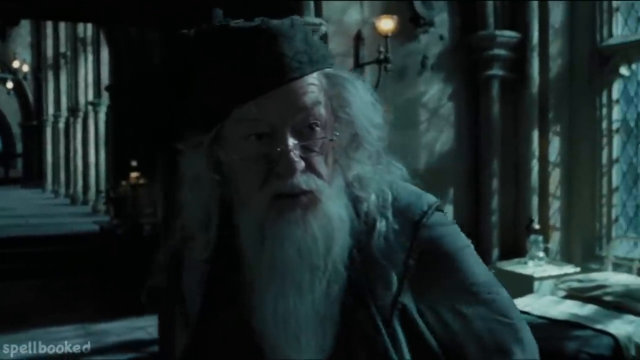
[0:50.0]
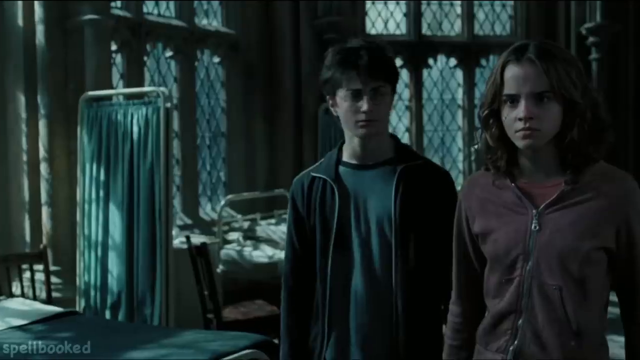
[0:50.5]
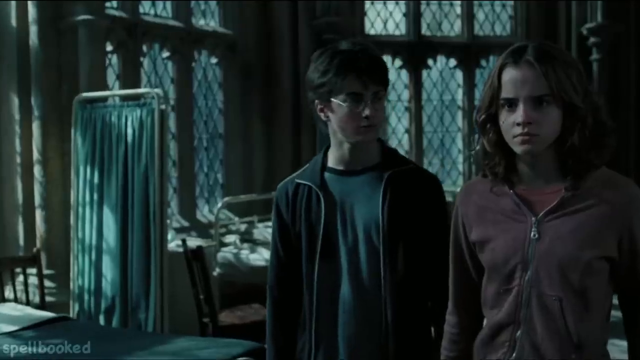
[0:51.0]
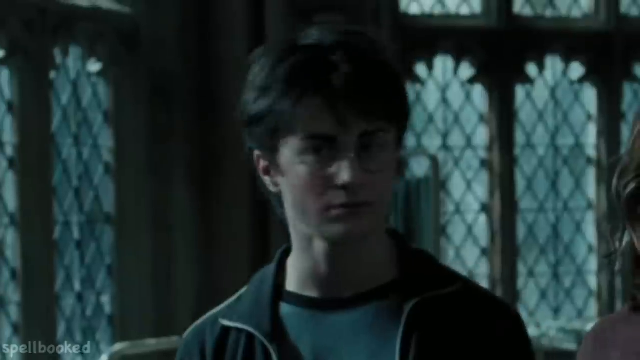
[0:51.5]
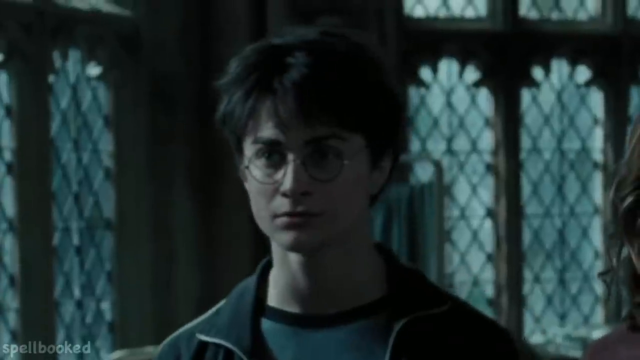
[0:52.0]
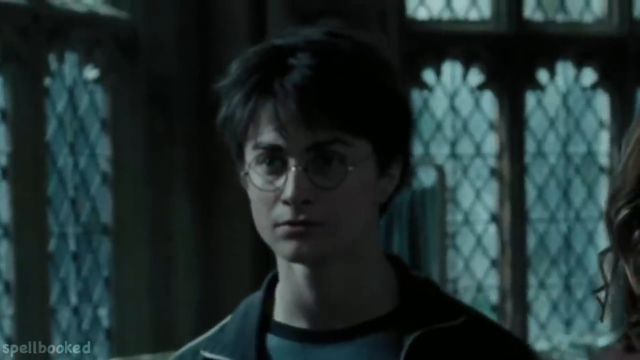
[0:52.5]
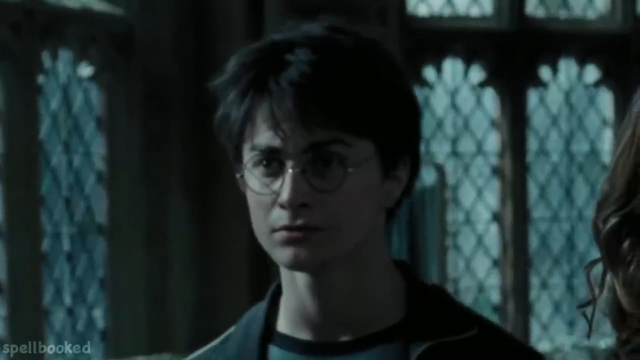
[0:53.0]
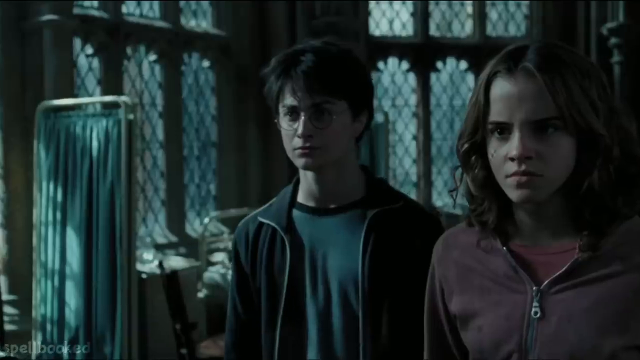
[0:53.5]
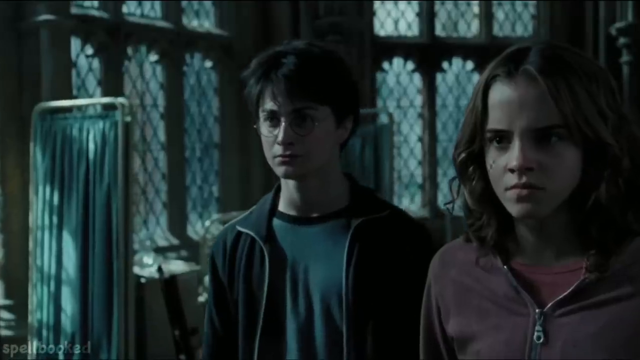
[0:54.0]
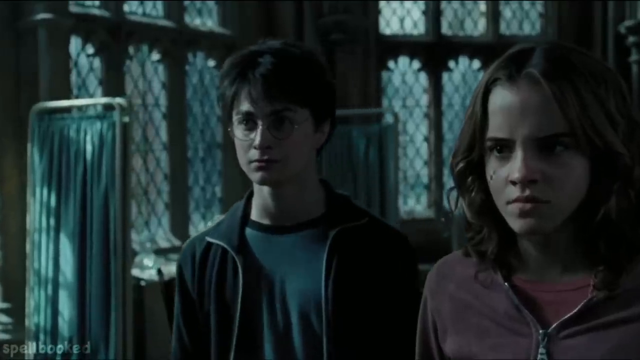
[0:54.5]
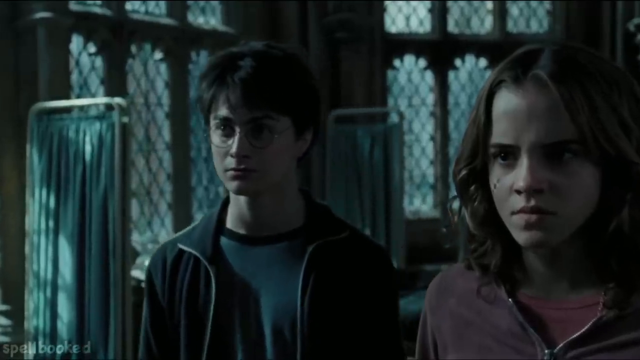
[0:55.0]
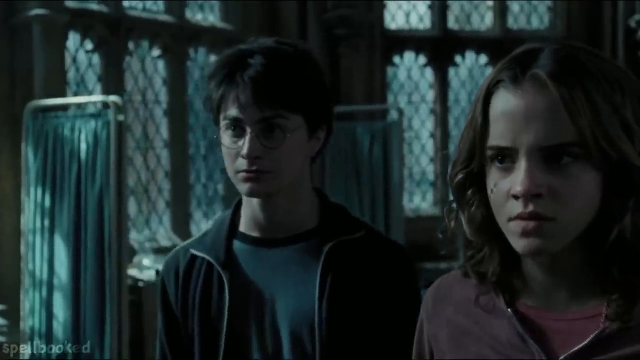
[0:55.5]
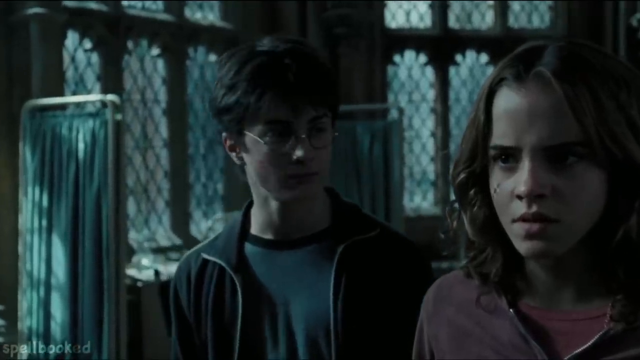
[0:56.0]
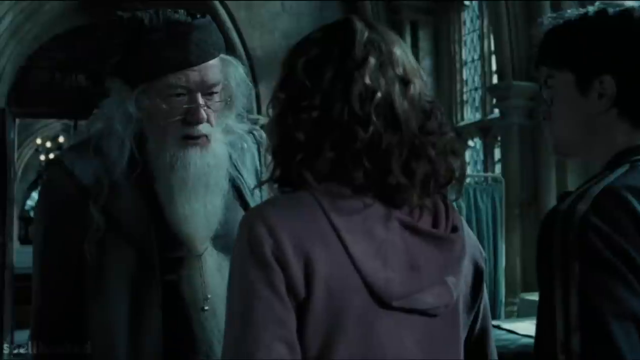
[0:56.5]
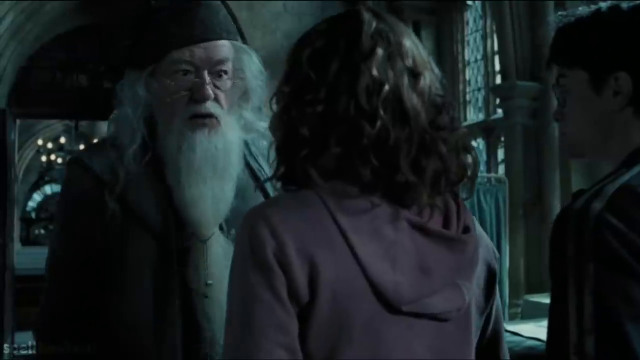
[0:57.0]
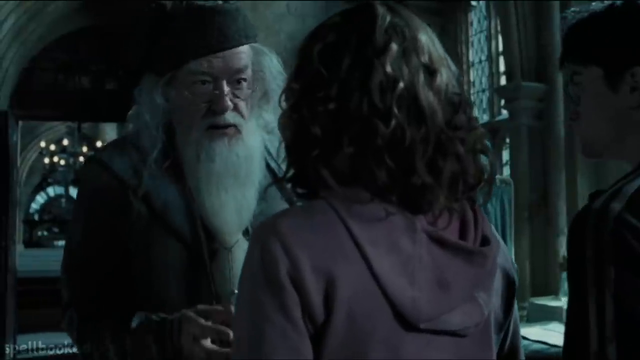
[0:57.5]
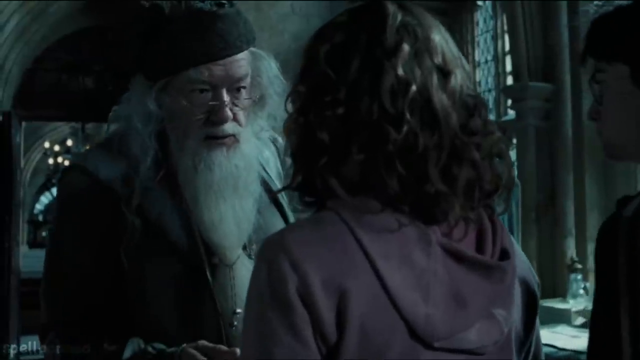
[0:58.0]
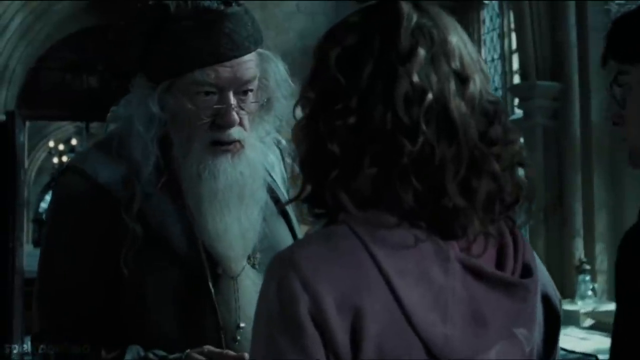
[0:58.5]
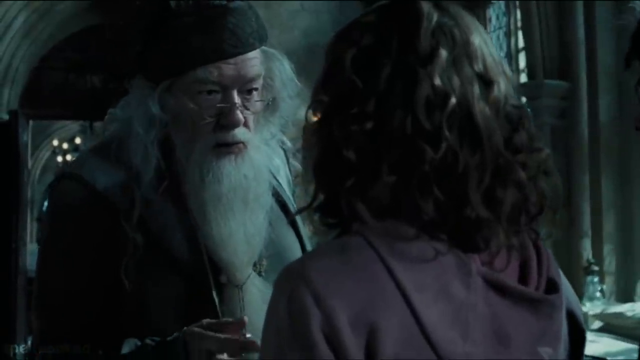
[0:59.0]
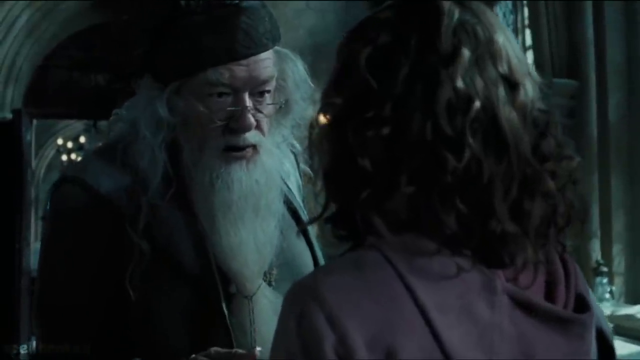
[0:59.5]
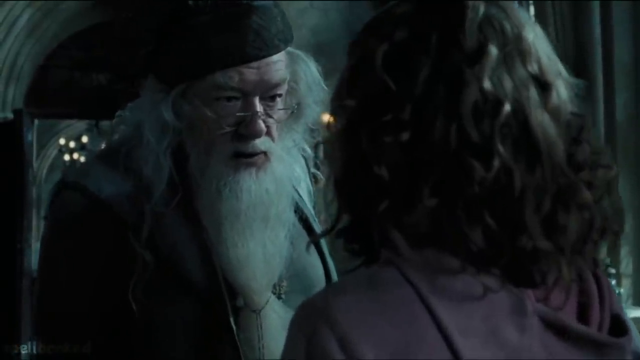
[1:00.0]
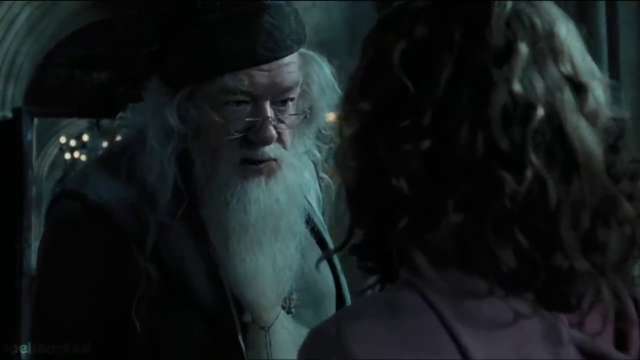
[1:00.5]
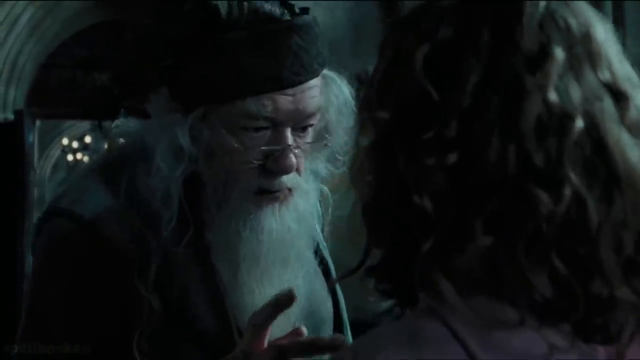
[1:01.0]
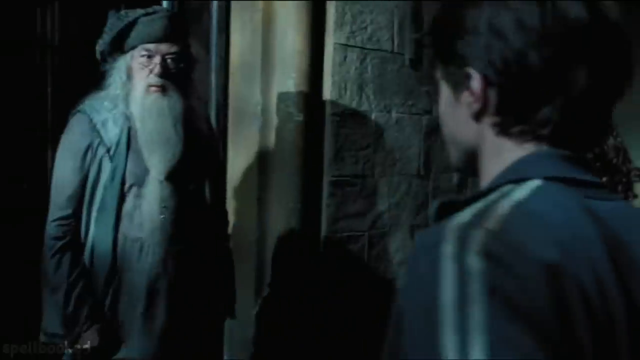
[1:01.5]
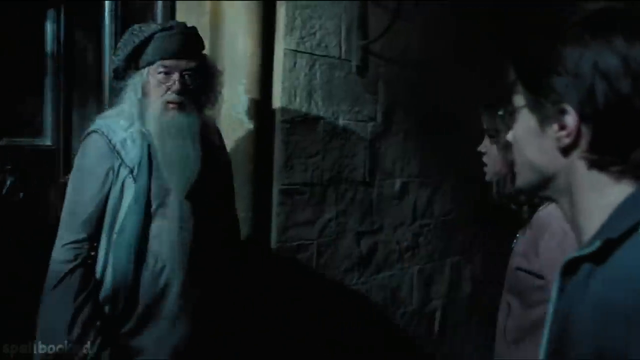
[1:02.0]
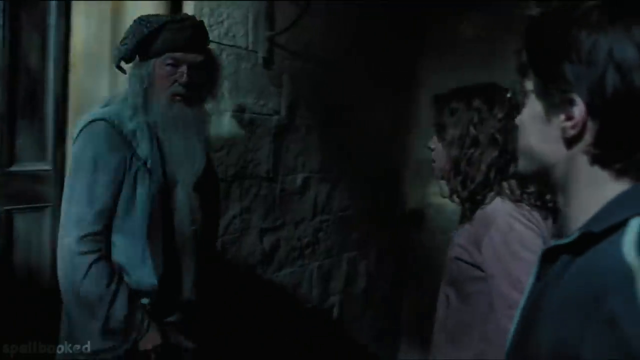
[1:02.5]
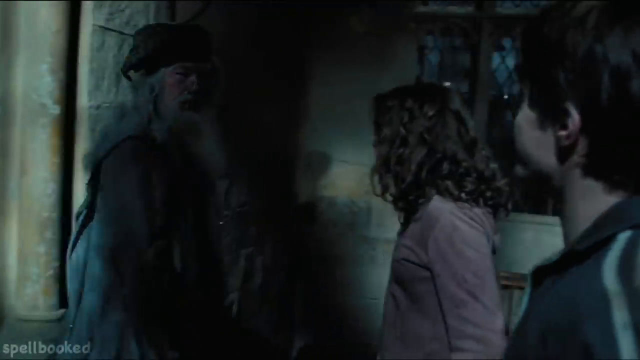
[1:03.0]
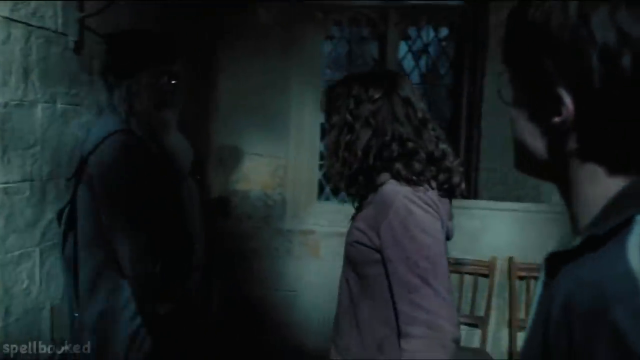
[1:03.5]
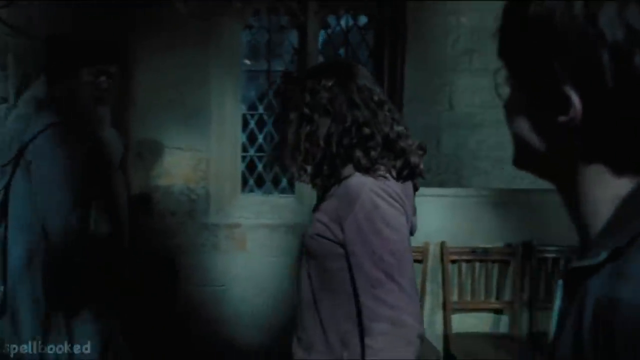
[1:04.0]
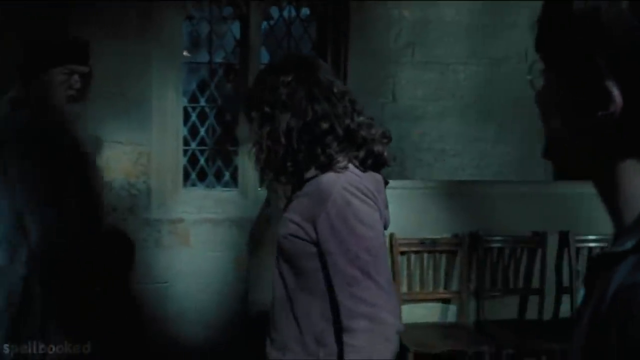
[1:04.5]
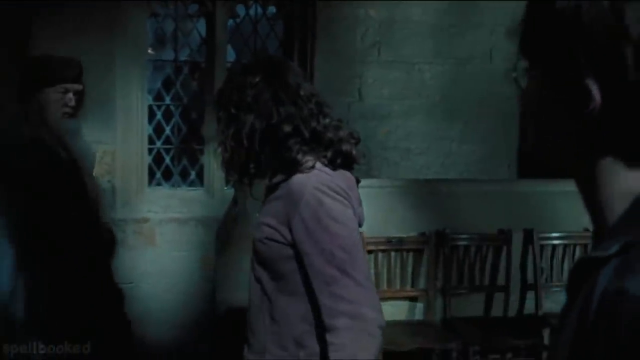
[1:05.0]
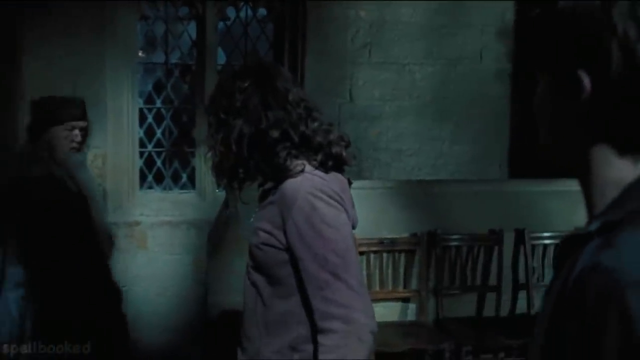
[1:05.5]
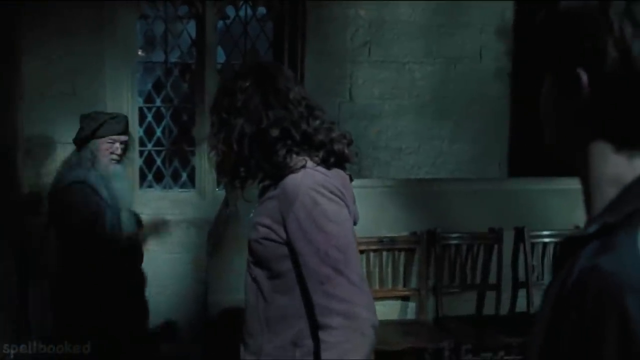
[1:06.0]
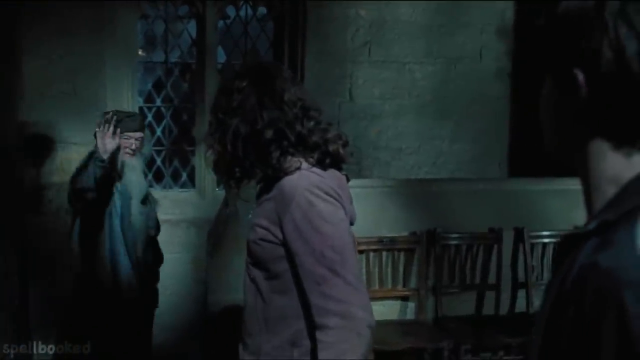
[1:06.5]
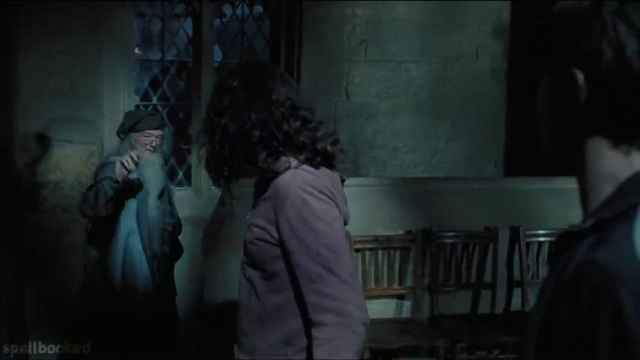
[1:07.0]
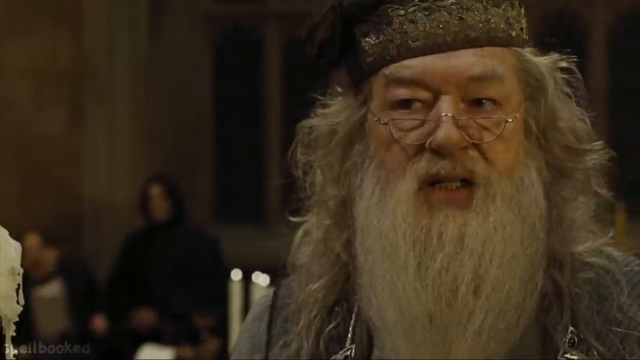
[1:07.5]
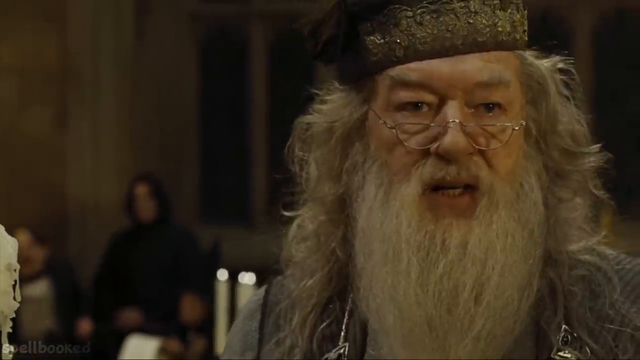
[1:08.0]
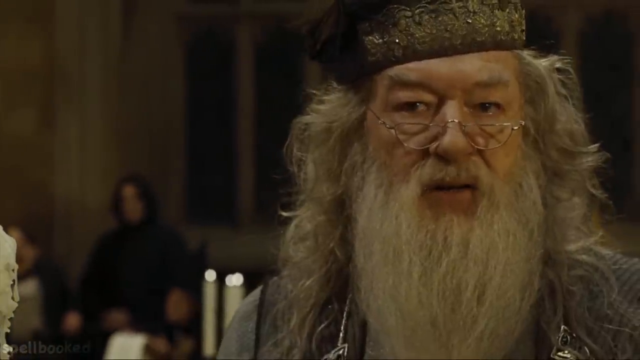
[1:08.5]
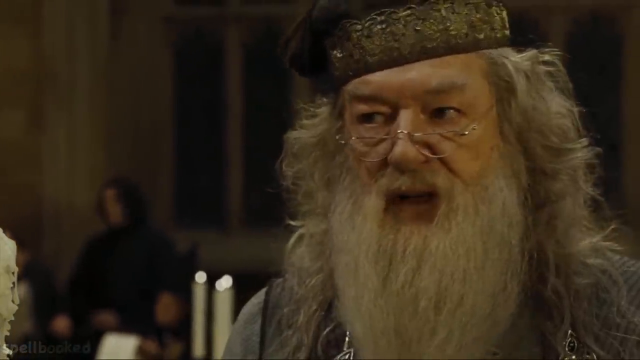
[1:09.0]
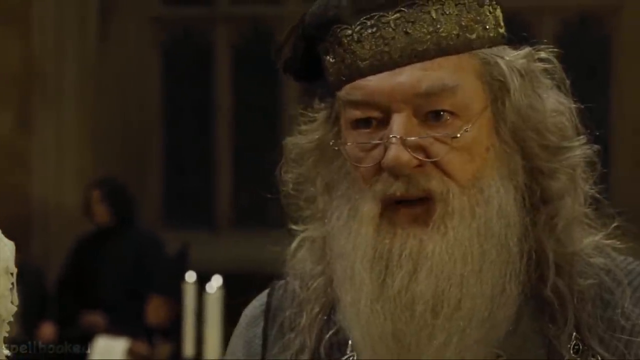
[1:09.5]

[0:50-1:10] Dumbledore is in a hallway at night, and it looks like they are in the infirmary. Harry Potter looks much older now, and Hermione stands next to him. Harry has a kind of bewildered look on his face, while Hermione looks angry, and by her eye she has what looks like a scar that is taped up. Dumbledore walks up and gets very close to her, looking angry, close enough to touch her with his finger. The scene switches again, and Dumbledore appears to be back in the building, where it is lighter. Snape and Professor Flit can be made out in the background, though the background behind Dumbledore is blurry.